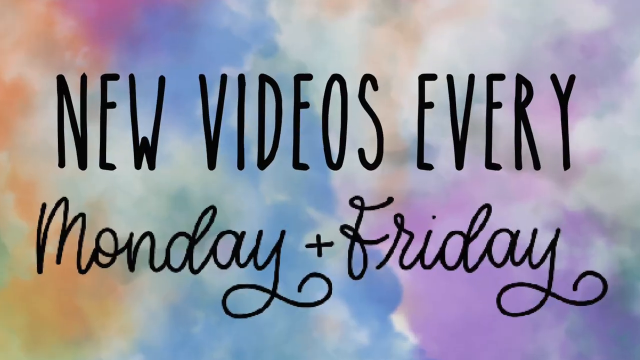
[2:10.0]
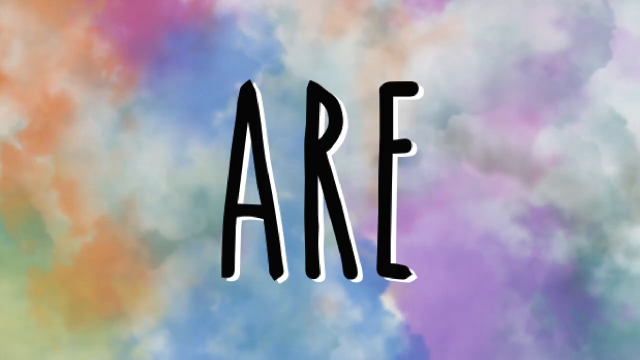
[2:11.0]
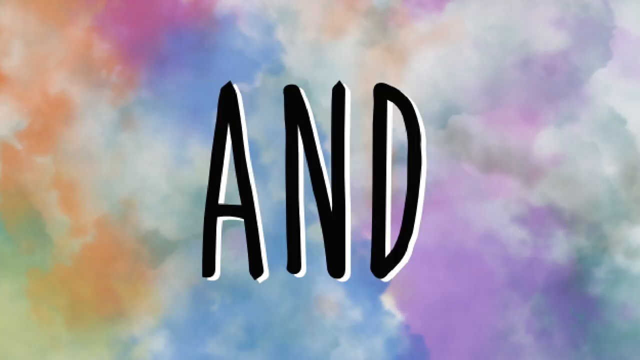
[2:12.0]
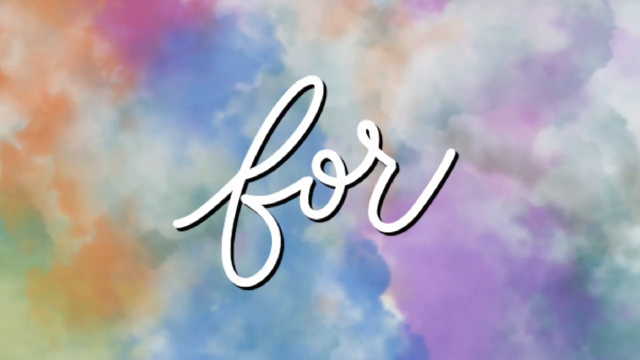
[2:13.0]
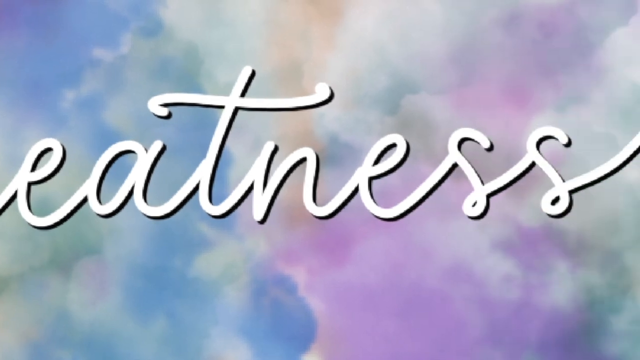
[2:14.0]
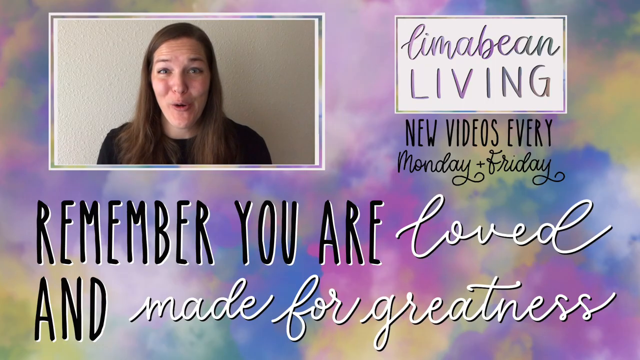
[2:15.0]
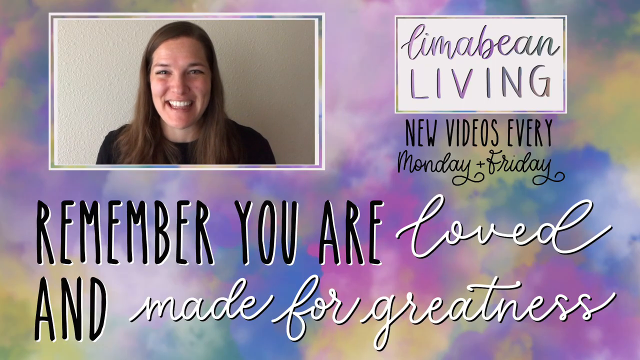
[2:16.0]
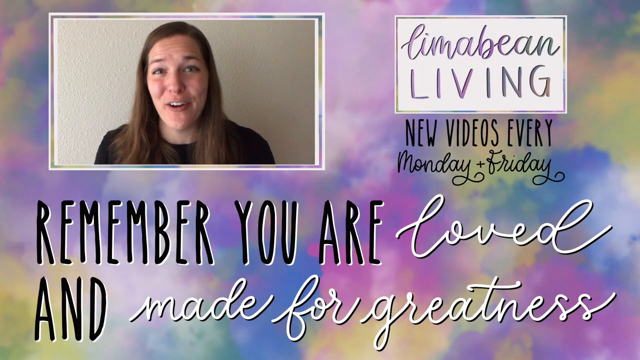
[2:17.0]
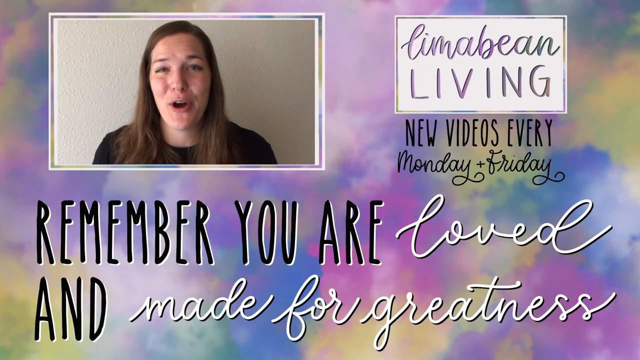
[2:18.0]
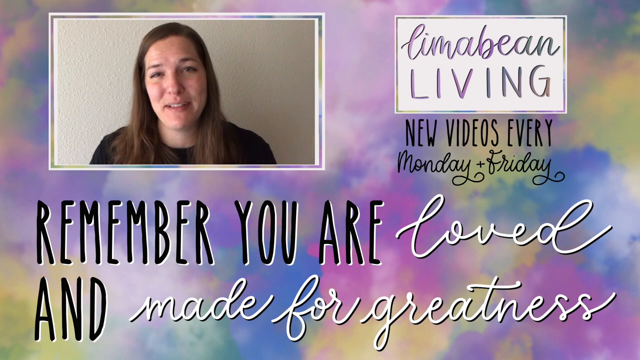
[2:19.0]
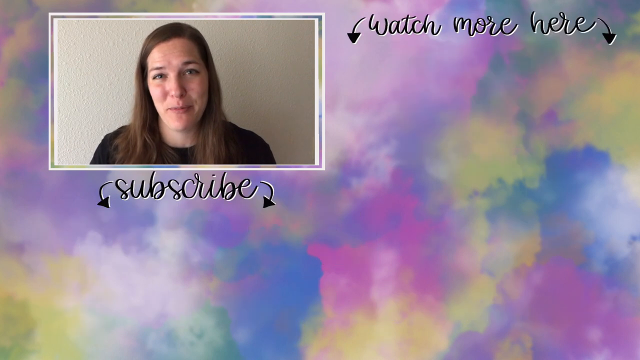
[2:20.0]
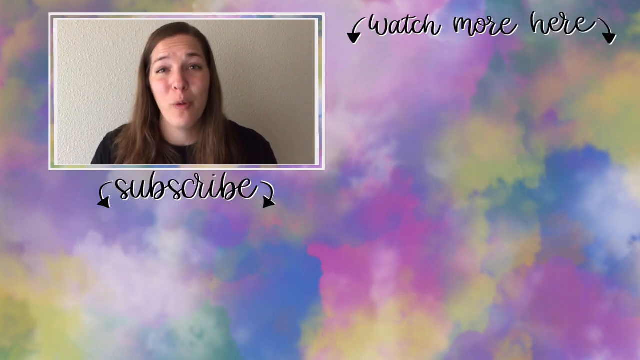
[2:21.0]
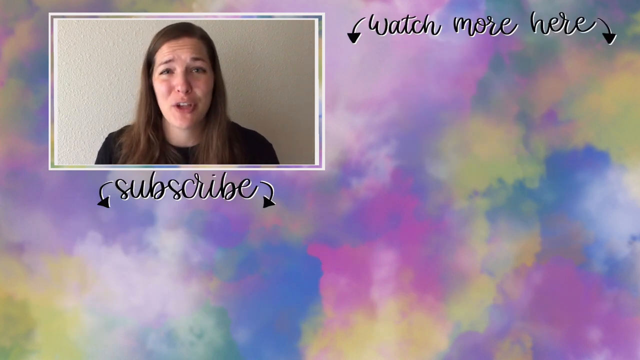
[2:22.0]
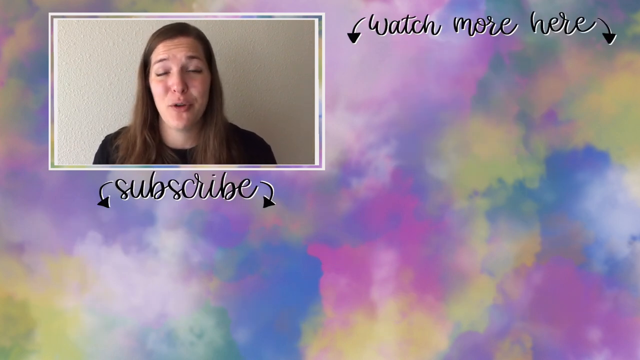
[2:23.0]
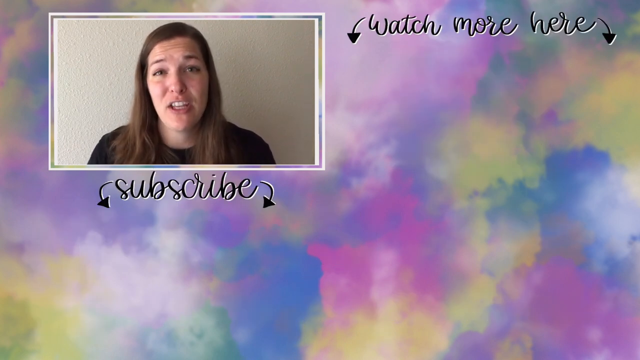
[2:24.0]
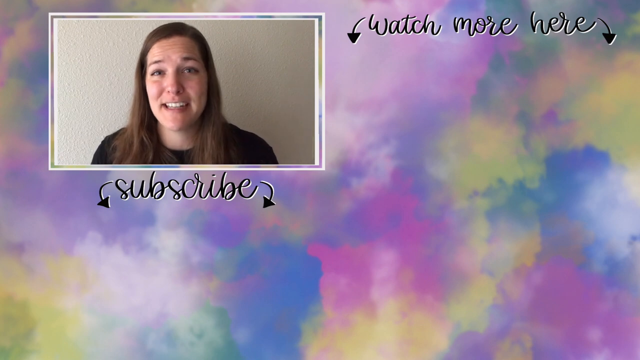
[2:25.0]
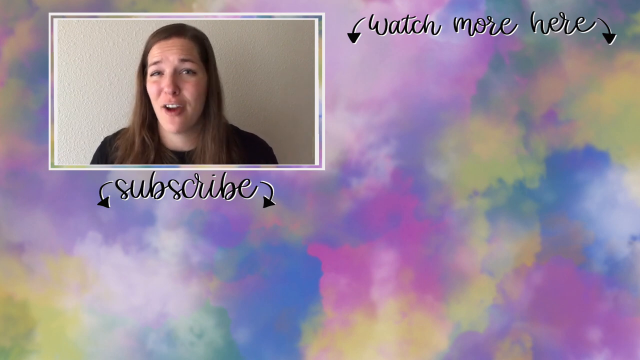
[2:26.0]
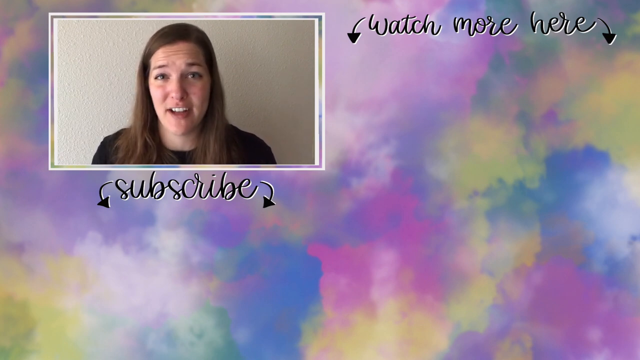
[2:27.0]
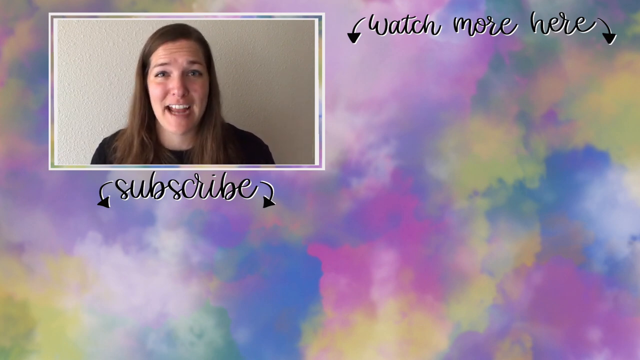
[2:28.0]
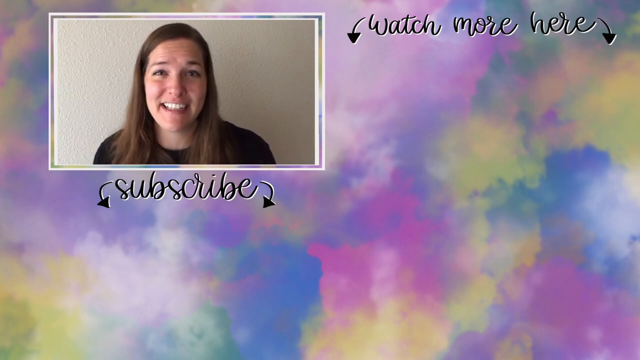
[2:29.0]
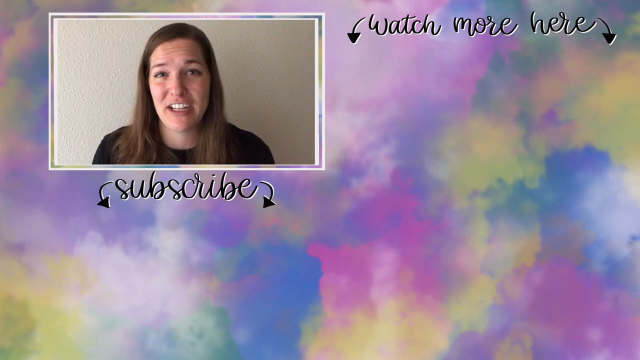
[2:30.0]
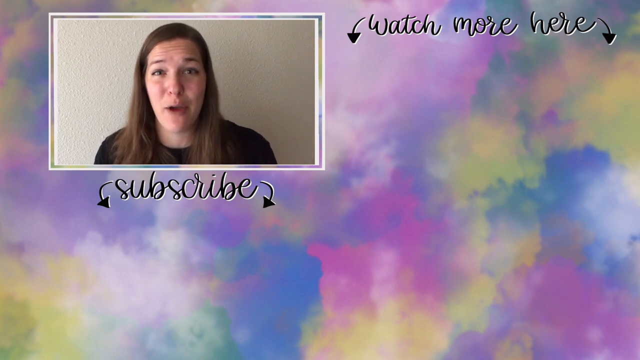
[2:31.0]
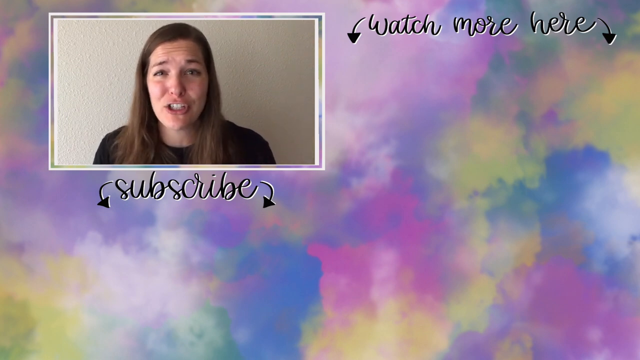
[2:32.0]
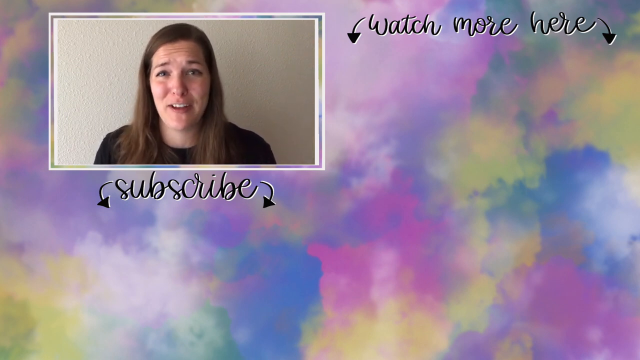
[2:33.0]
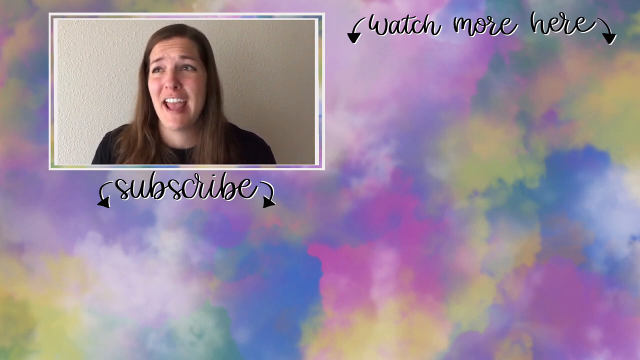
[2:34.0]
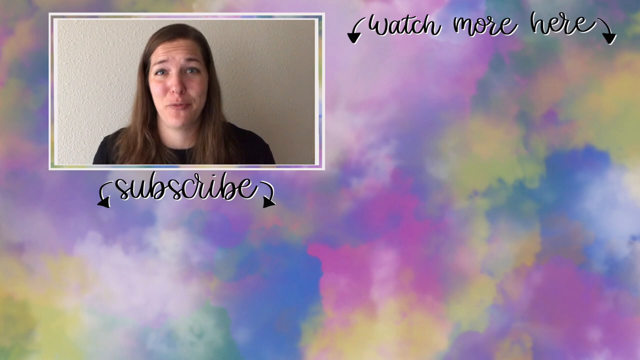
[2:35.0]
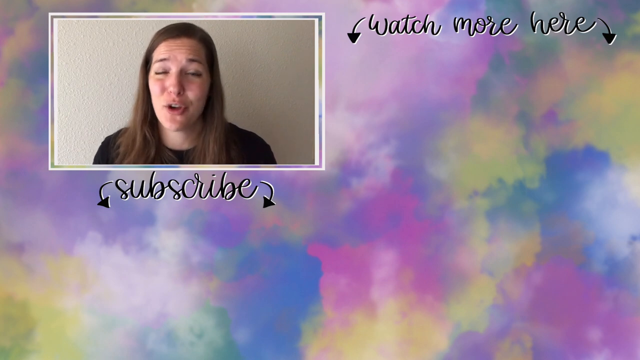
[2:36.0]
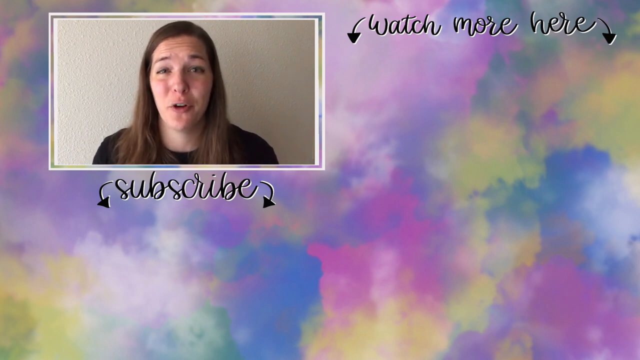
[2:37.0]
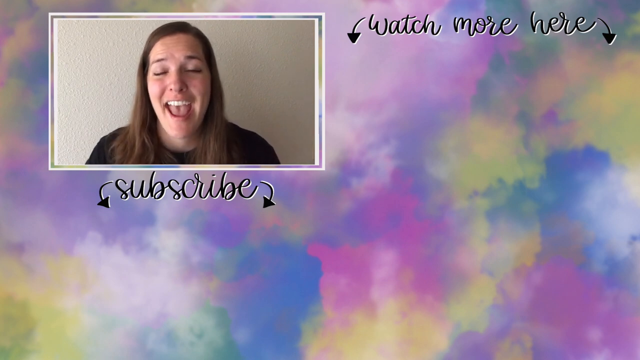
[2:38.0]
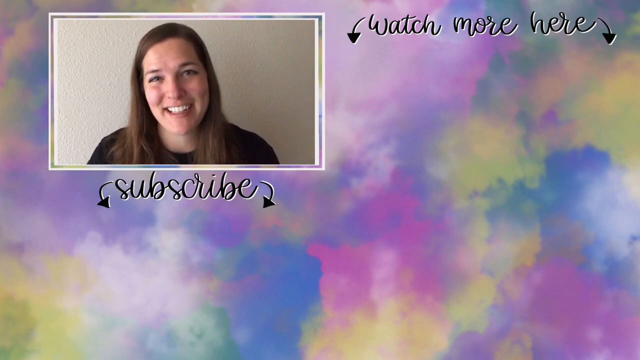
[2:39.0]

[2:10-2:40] The screen background looks like a watercolor cloud effect in various colors of blue, purple, yellow, orange and hints of green. Written across it in fanciful black text is "new videos every Monday plus Friday". Next, the words "Remember you are loved and made for greatness" appear rapidly one by one. The screen then transitions to show an image of a woman, with "new videos every Monday plus Friday" below it and, at the bottom of the screen below the woman, "remember you are loved and made for greatness". The woman is speaking in the video insert, talking with excitement and revealing her teeth. She continues to speak until the end, finishing with a smile.